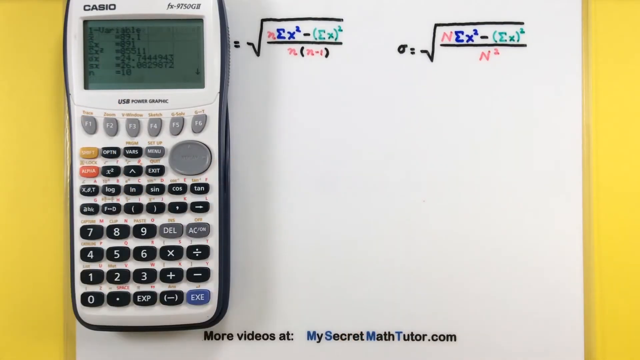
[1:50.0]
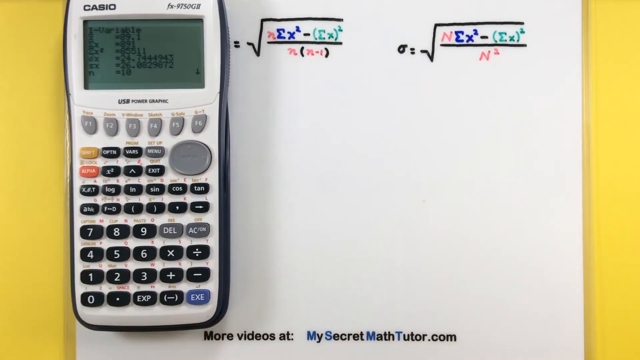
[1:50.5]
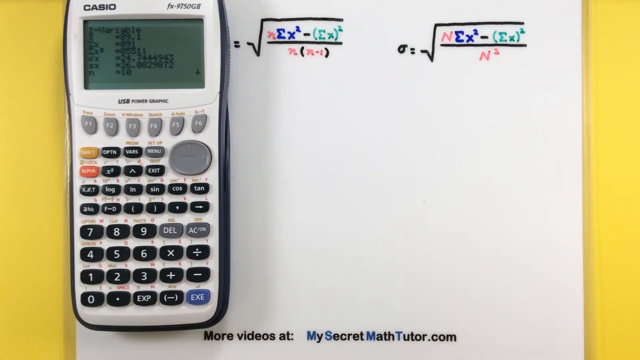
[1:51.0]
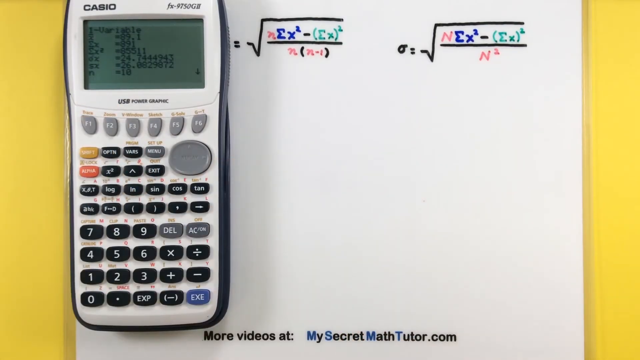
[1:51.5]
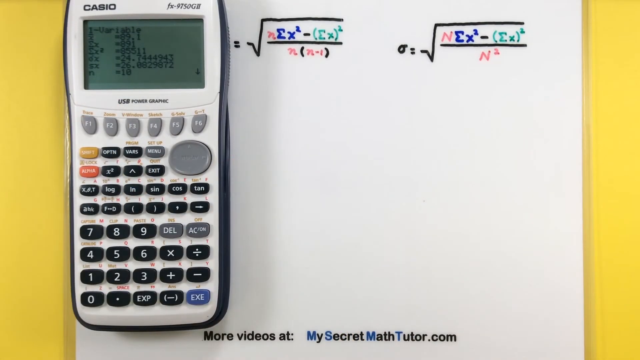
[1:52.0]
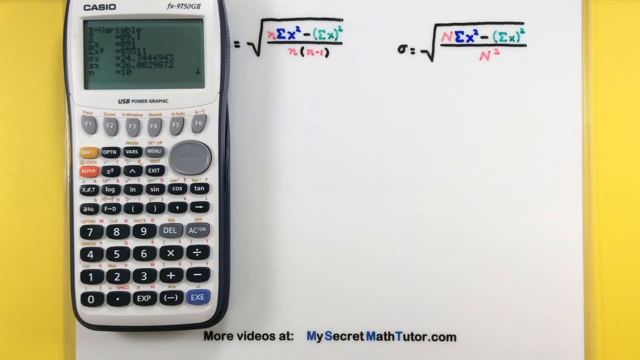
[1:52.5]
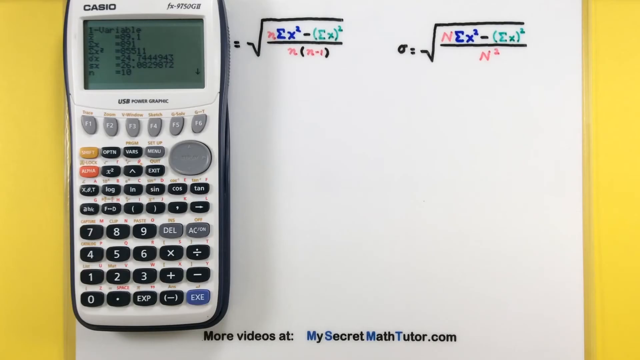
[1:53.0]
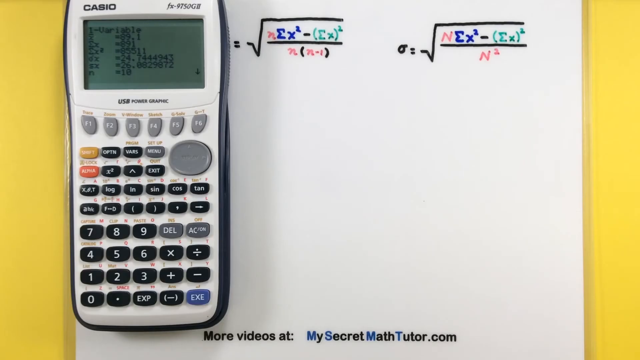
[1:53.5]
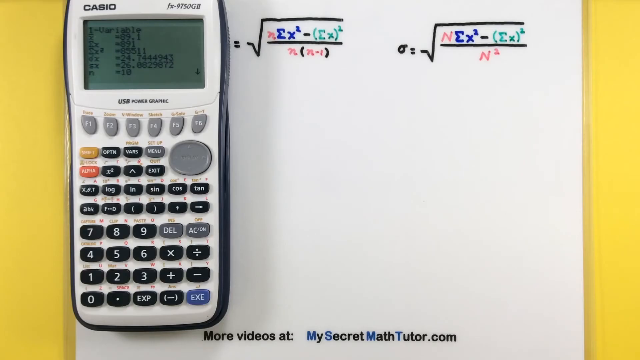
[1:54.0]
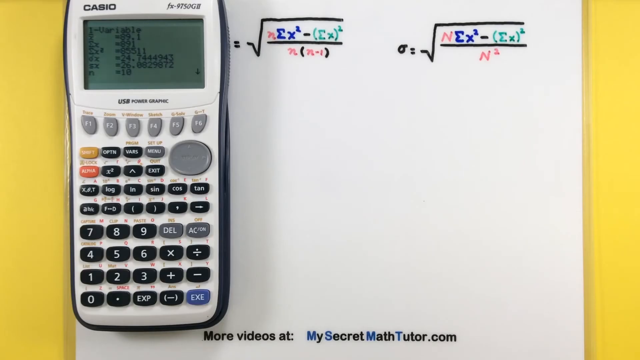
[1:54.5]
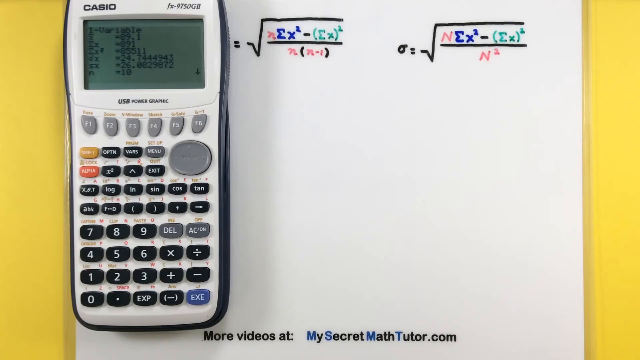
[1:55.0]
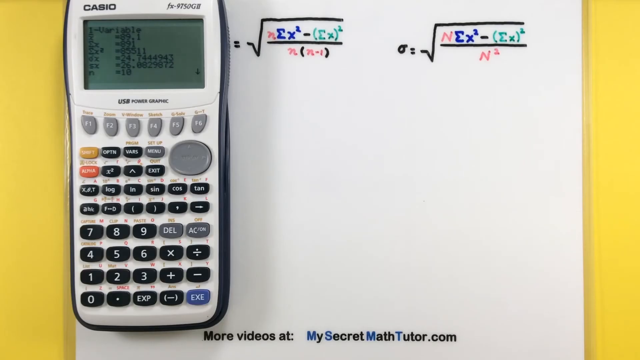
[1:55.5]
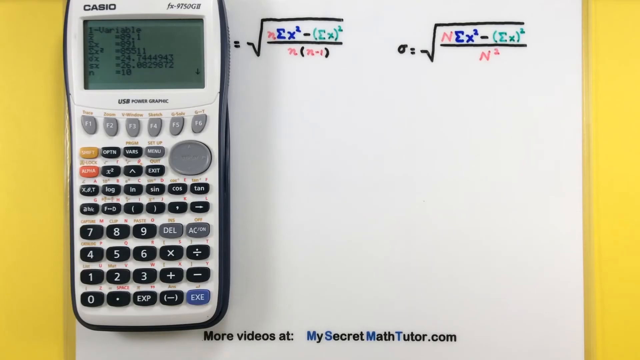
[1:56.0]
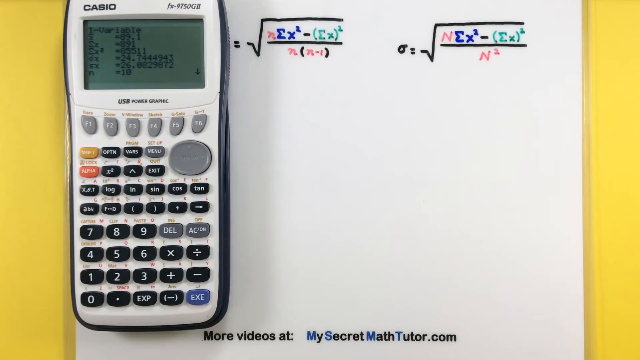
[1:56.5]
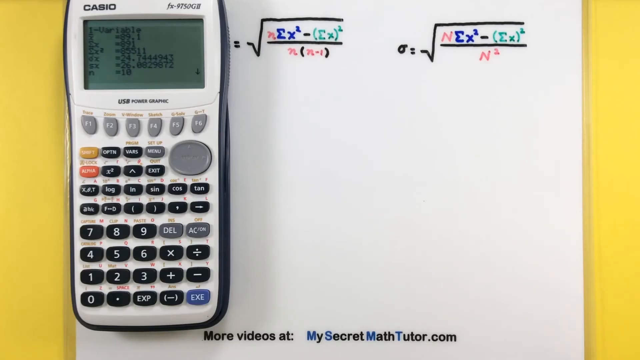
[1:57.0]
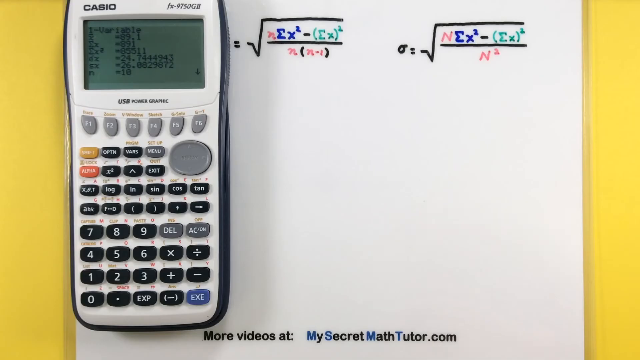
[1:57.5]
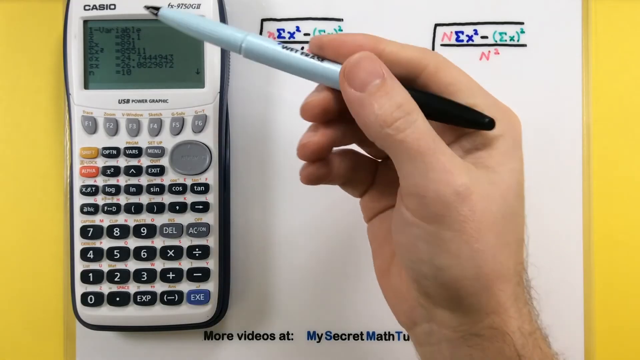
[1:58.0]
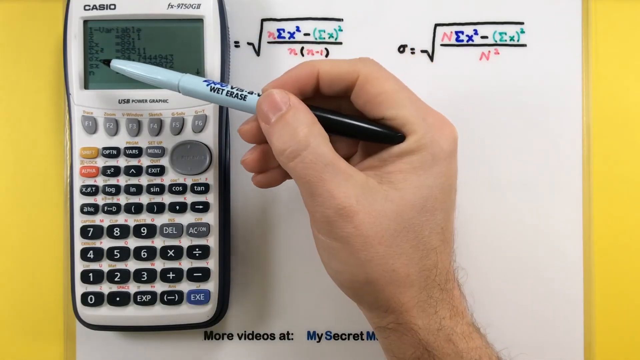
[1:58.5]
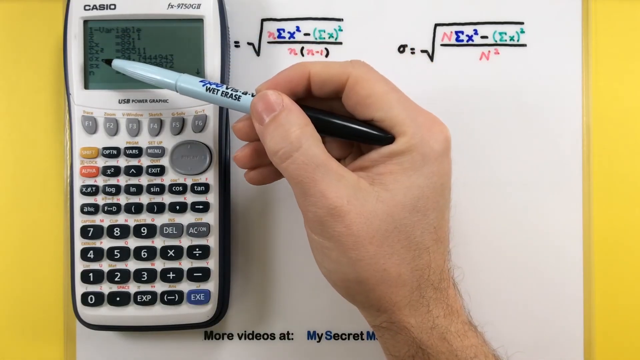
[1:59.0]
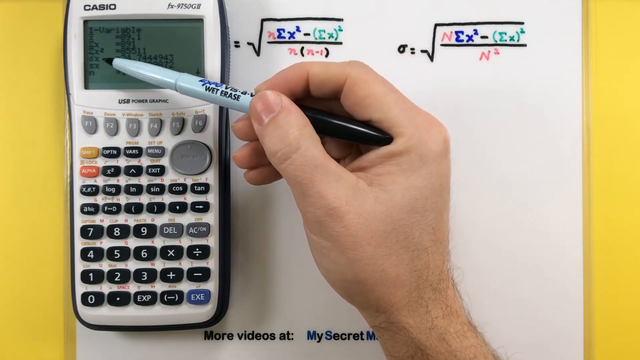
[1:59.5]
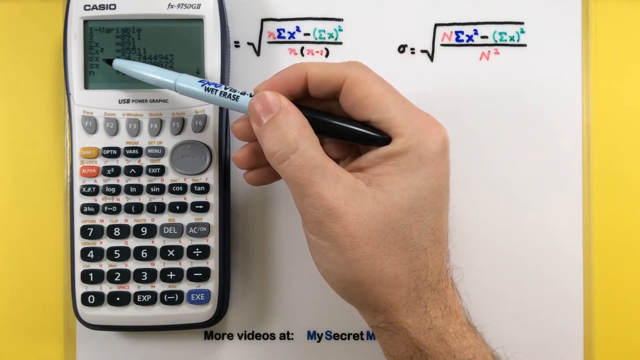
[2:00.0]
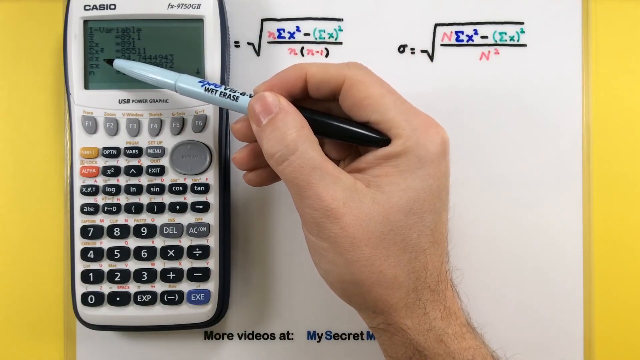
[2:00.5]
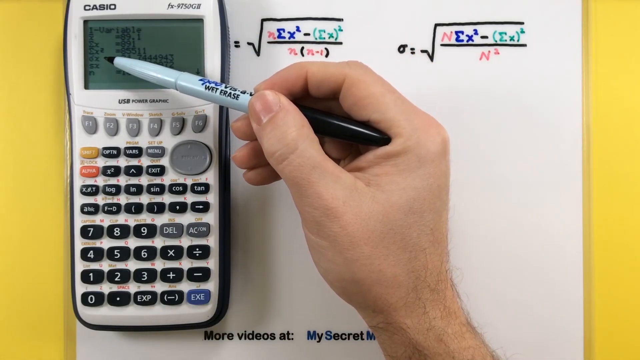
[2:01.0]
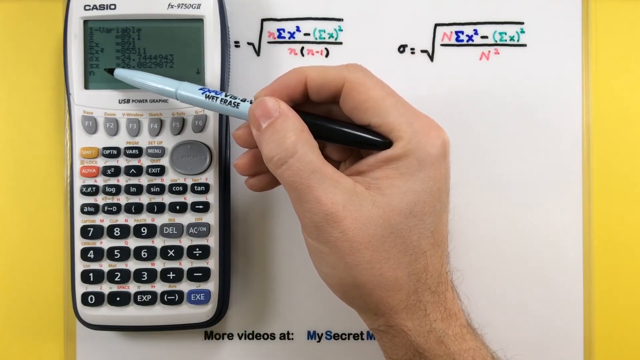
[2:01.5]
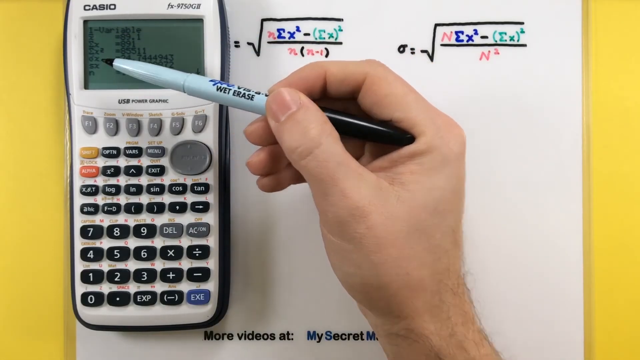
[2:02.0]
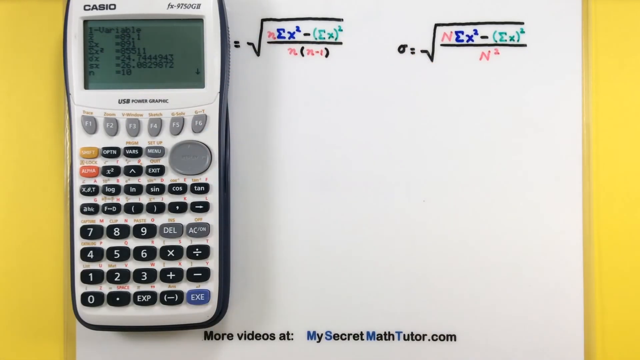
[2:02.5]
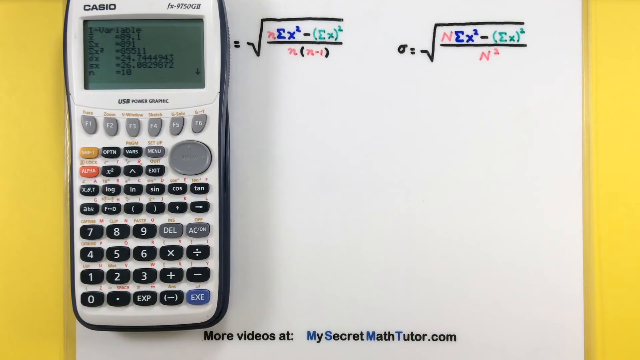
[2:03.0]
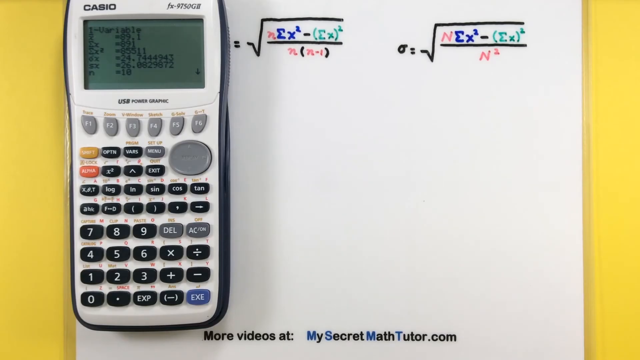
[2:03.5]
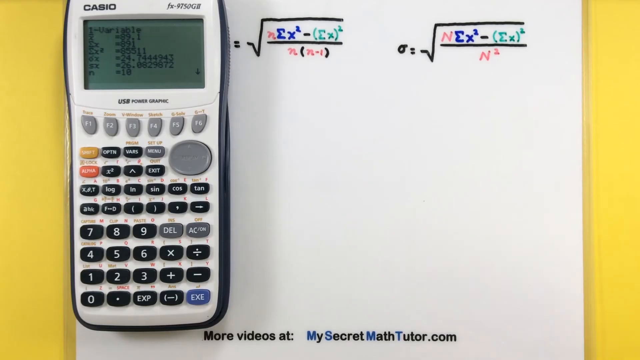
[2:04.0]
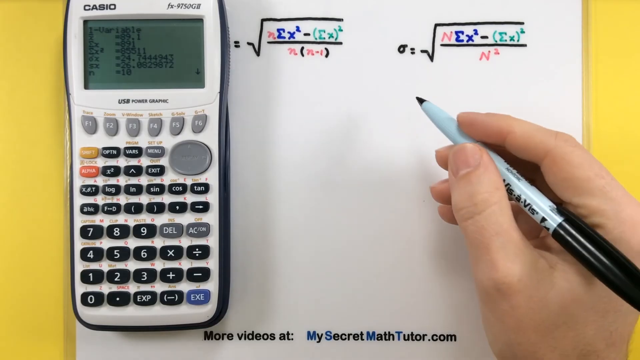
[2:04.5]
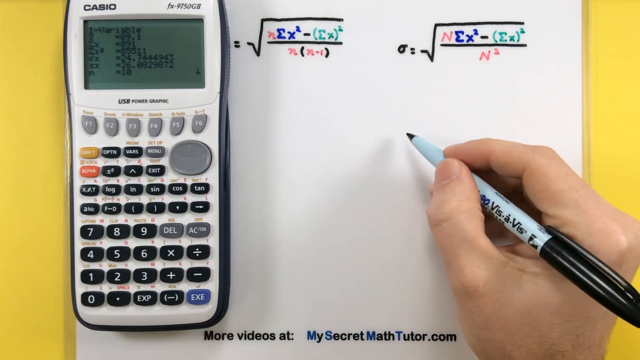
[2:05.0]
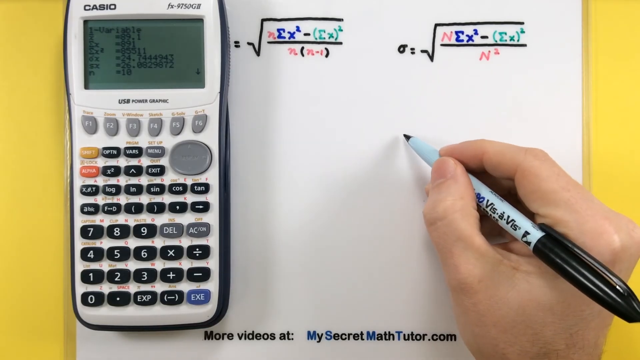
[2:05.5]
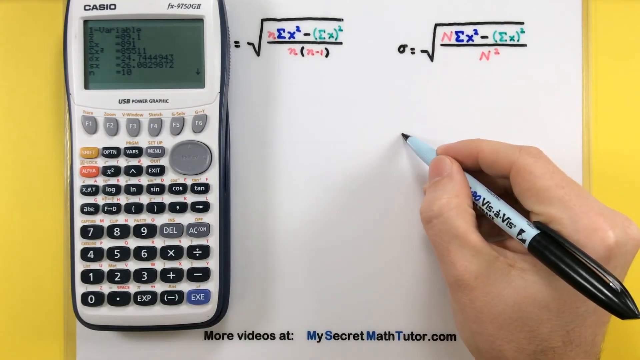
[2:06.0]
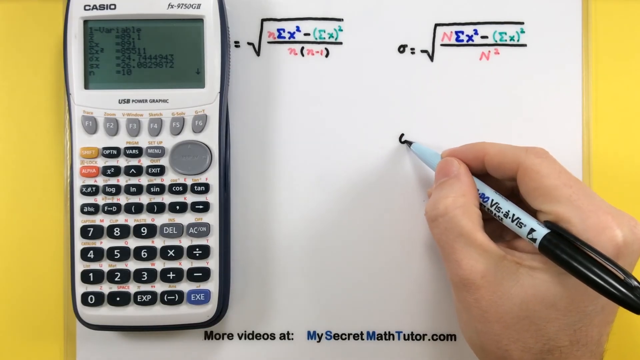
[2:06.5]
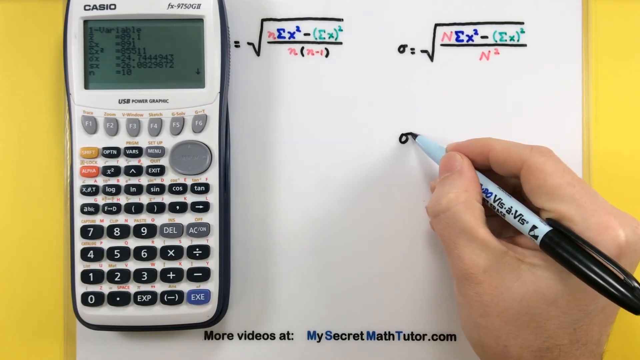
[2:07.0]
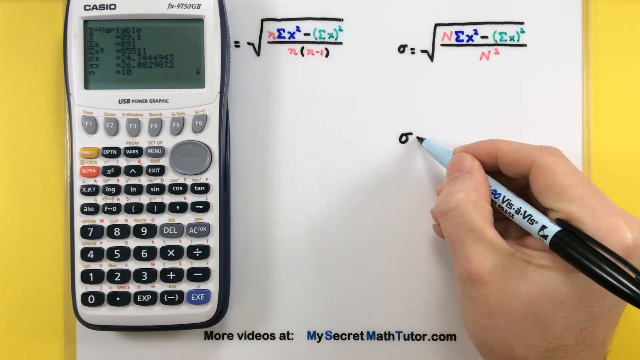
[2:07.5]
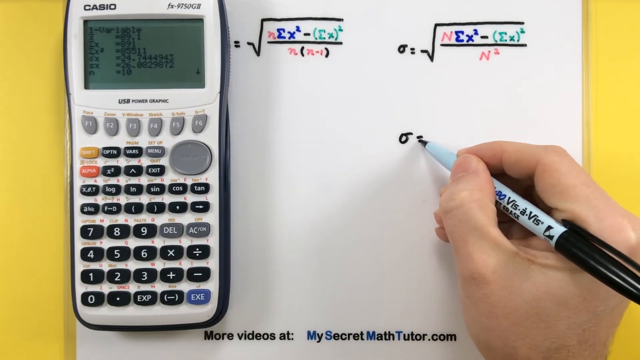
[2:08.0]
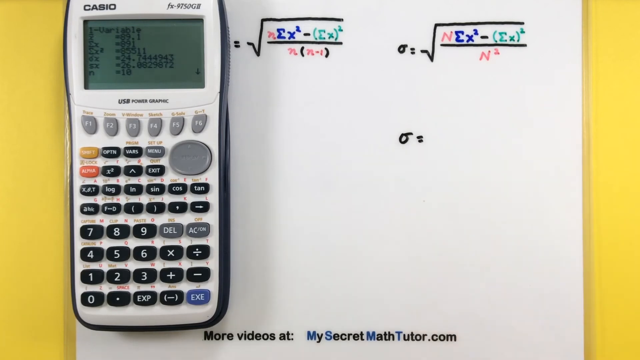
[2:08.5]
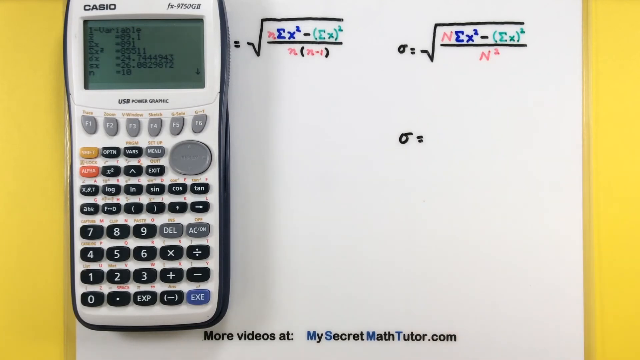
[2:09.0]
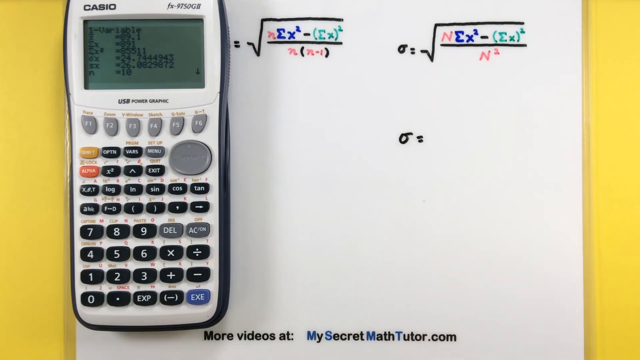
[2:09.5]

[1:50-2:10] A laminated white piece of paper is on a yellow desk, with a Casio calculator on top of it showing various values on its screen. The calculator has a white face, black buttons, gray function buttons and a gray directional pad. On the bottom right is a blue button that says "EXE". Below the function buttons are two colored buttons: a yellow one that says "SHIFT" and a red one that says "ALPHA". Some calculations are written on the paper. A hand holding a pen emerges from the bottom and uses the pen to point at the values on the calculator.